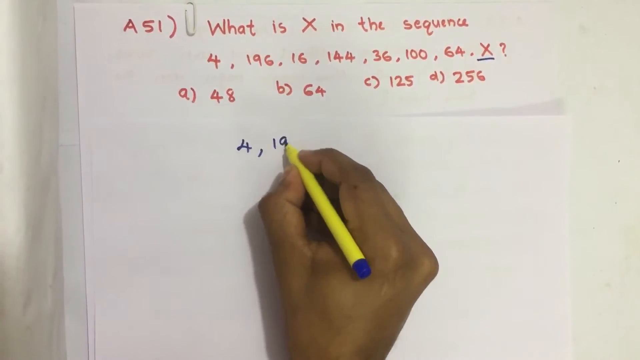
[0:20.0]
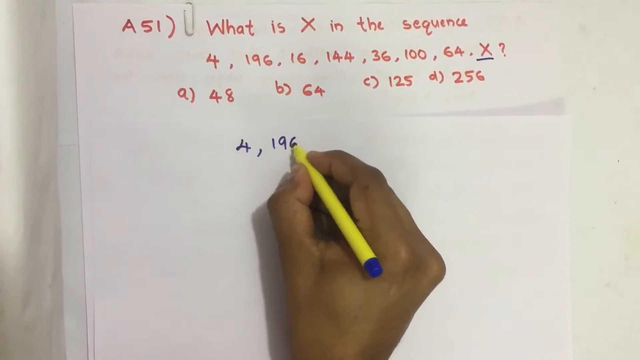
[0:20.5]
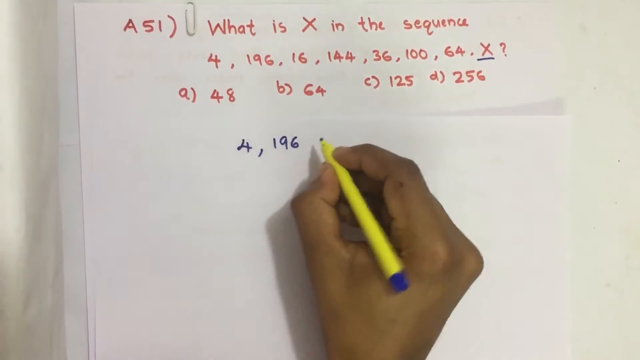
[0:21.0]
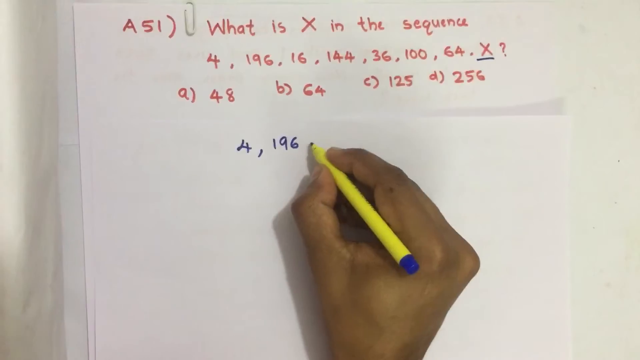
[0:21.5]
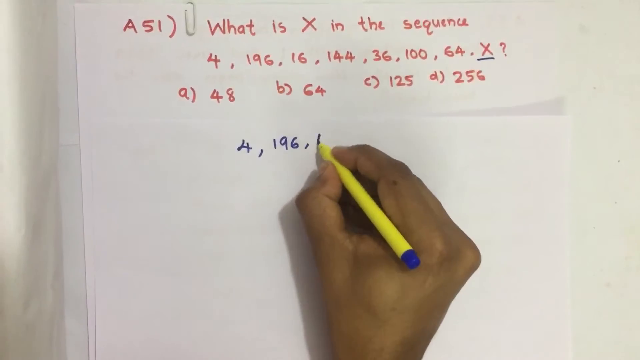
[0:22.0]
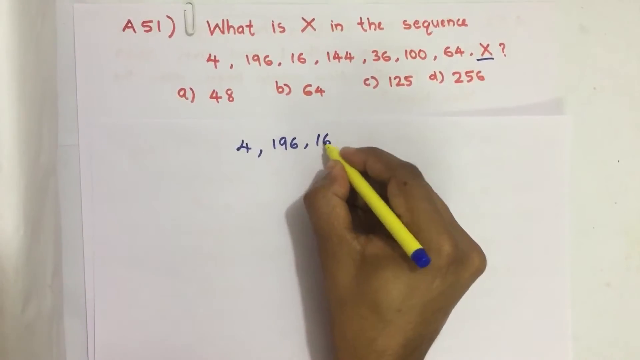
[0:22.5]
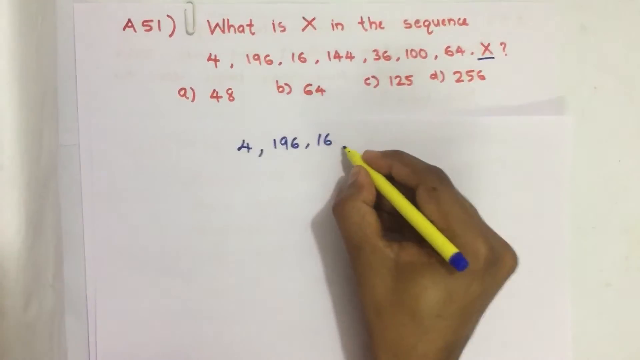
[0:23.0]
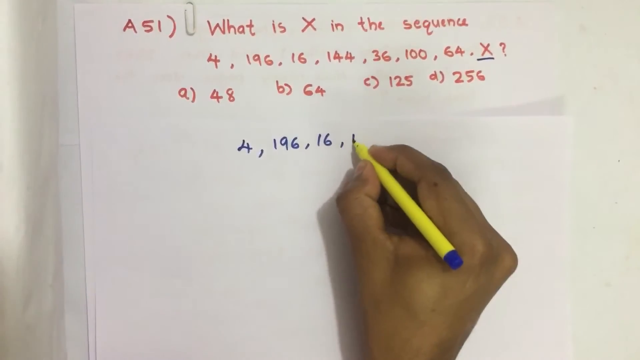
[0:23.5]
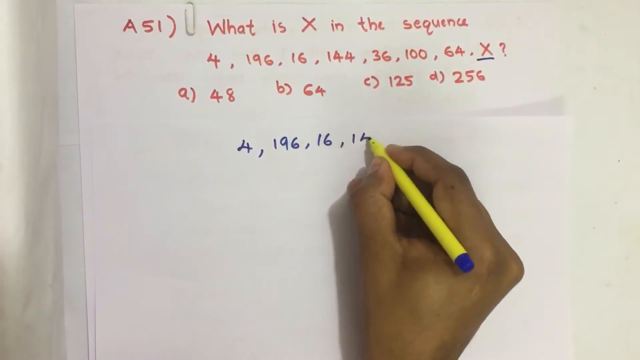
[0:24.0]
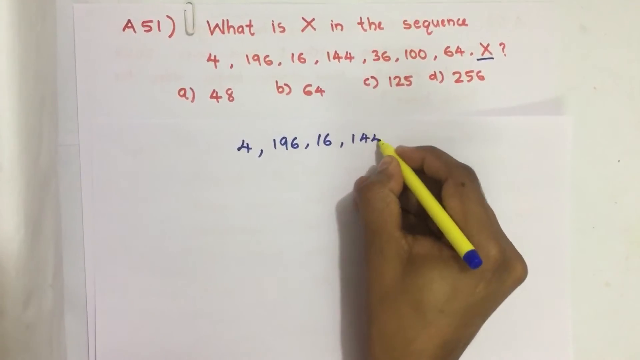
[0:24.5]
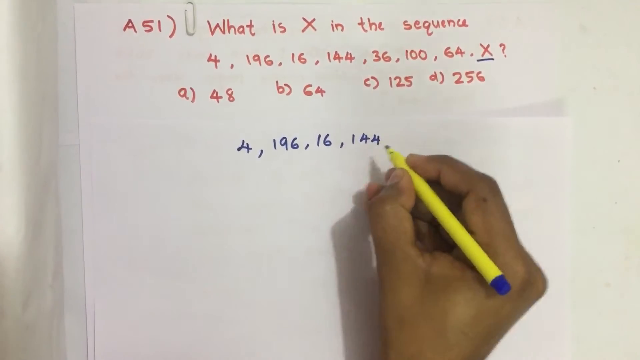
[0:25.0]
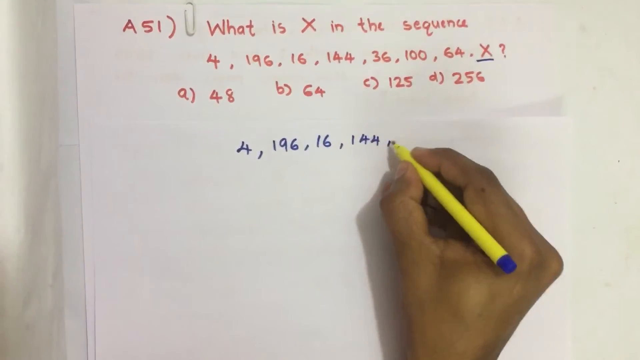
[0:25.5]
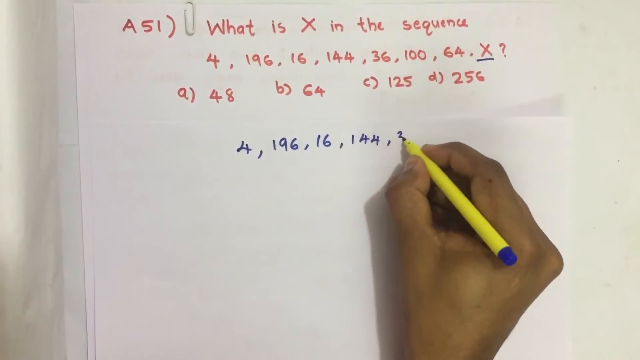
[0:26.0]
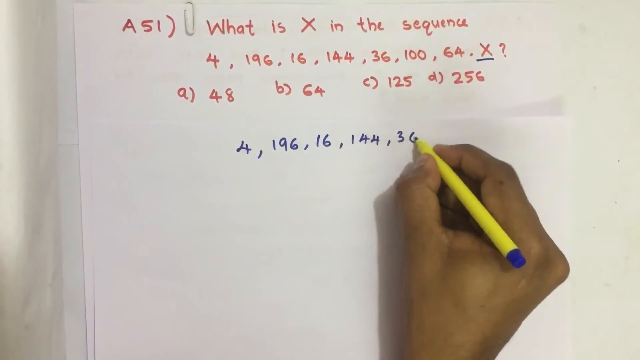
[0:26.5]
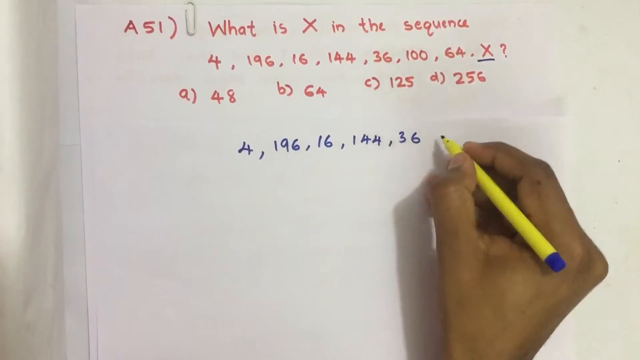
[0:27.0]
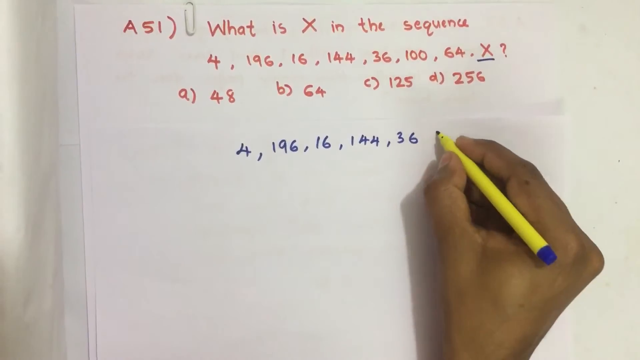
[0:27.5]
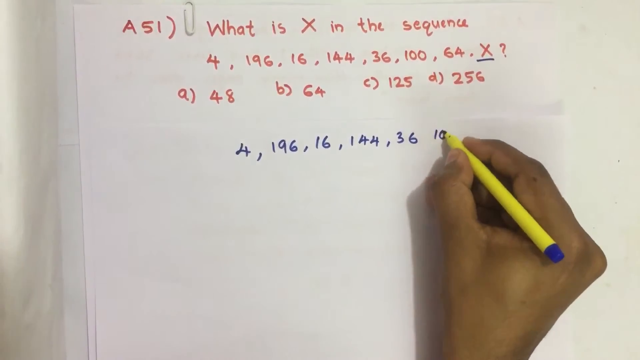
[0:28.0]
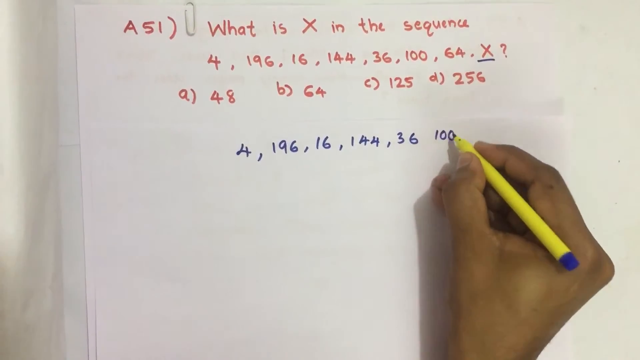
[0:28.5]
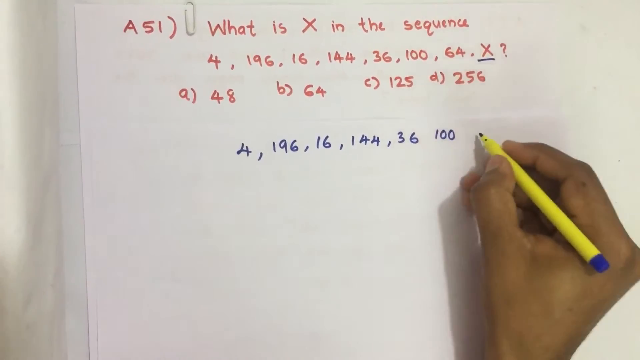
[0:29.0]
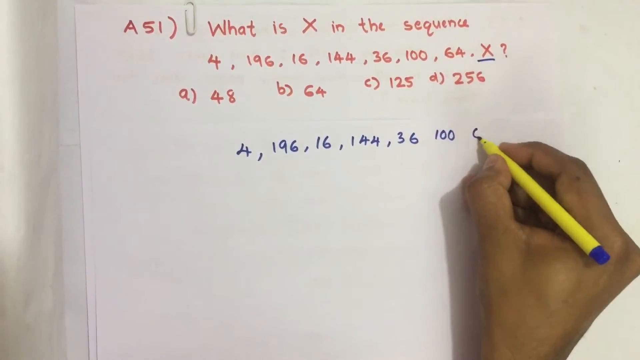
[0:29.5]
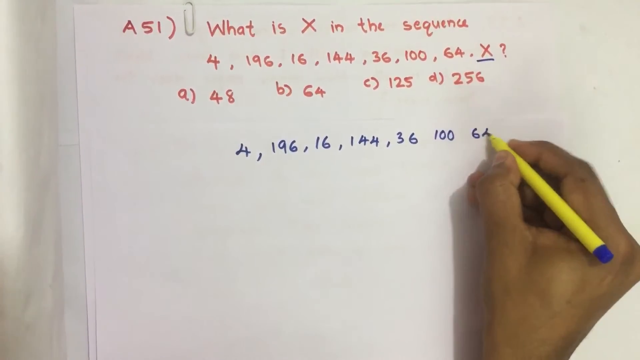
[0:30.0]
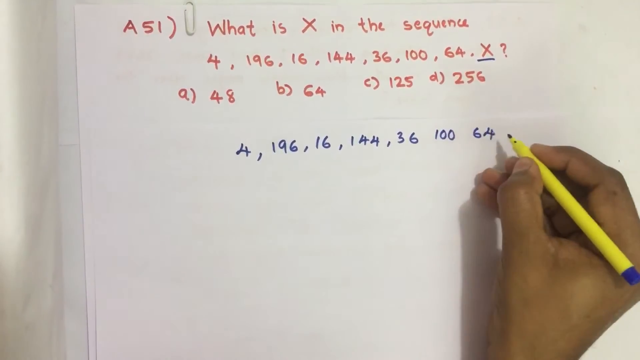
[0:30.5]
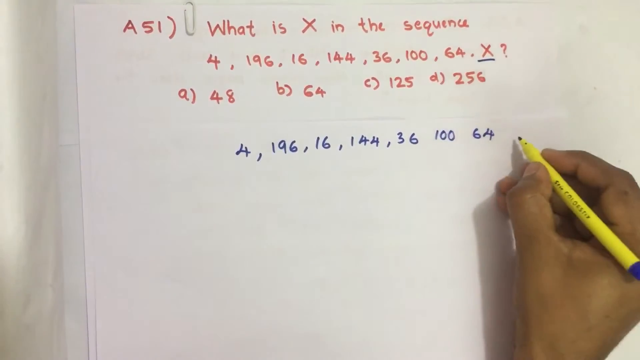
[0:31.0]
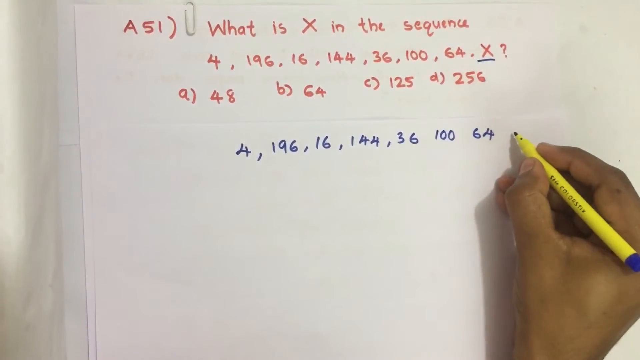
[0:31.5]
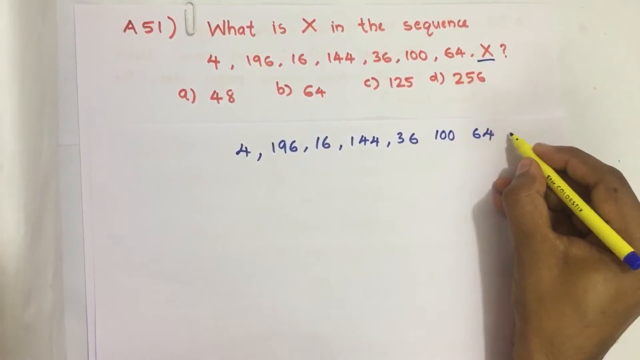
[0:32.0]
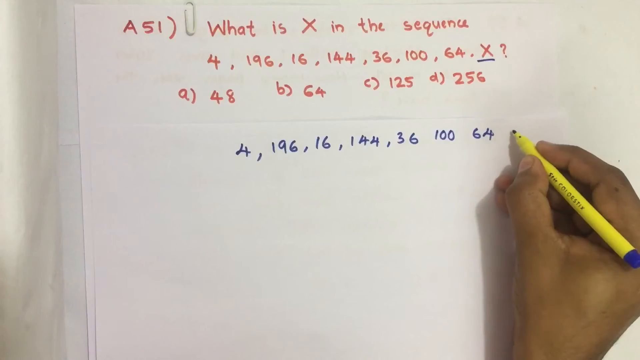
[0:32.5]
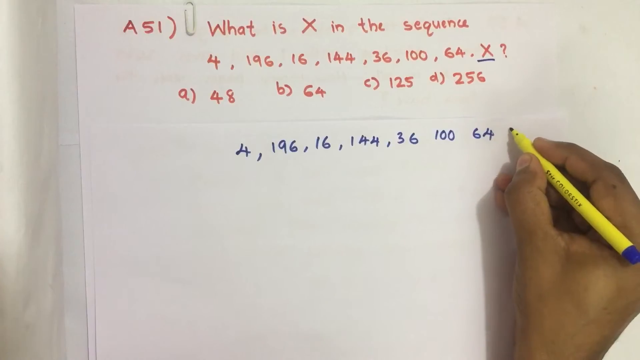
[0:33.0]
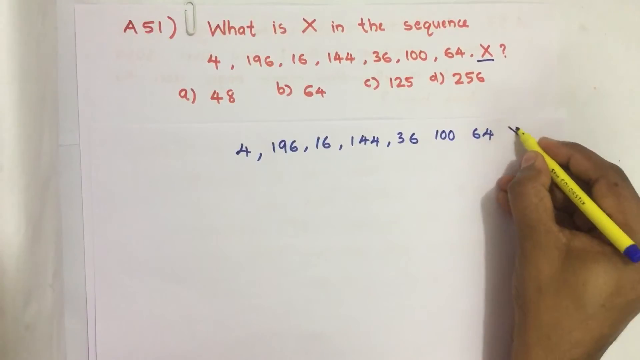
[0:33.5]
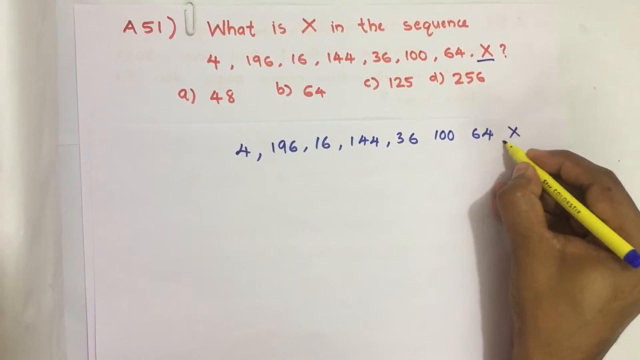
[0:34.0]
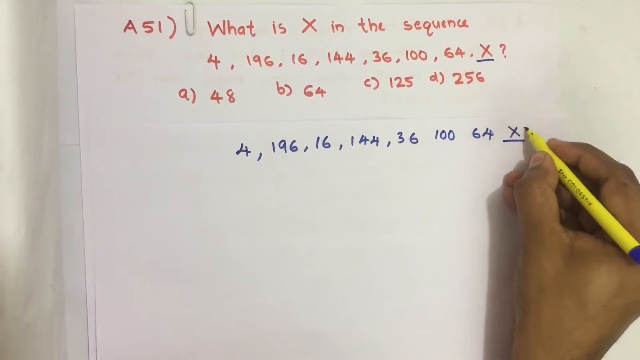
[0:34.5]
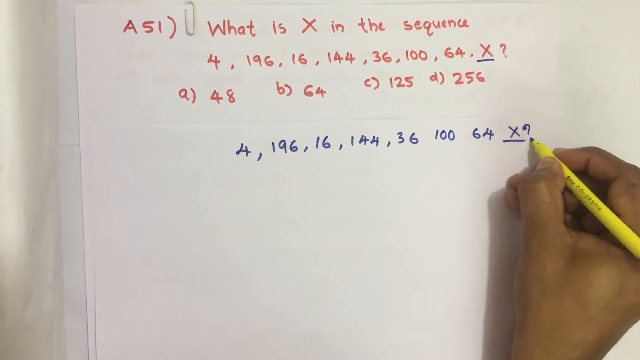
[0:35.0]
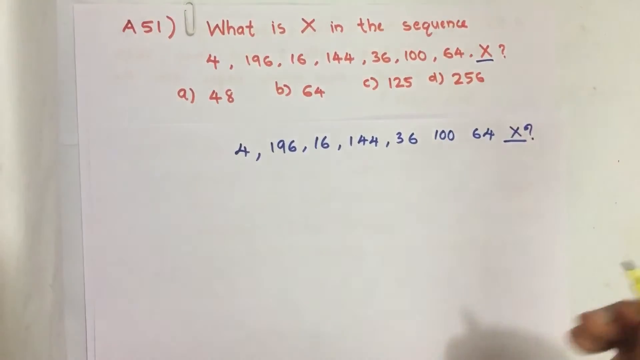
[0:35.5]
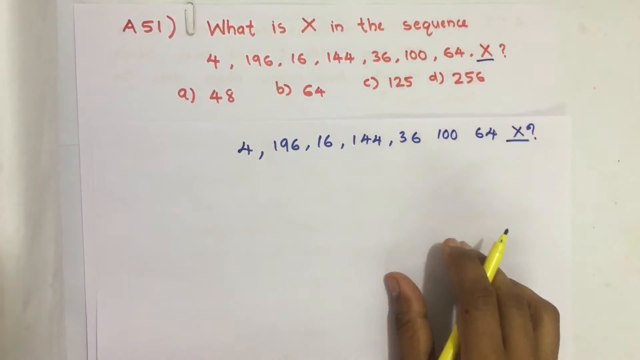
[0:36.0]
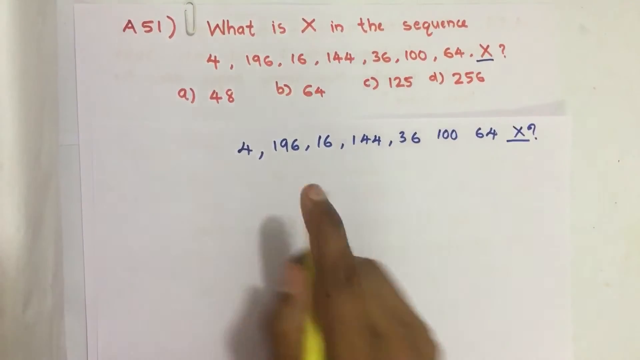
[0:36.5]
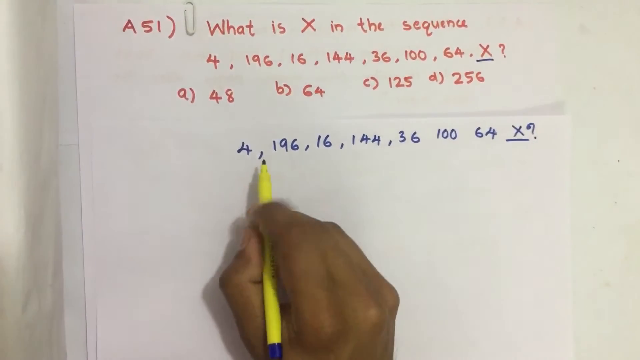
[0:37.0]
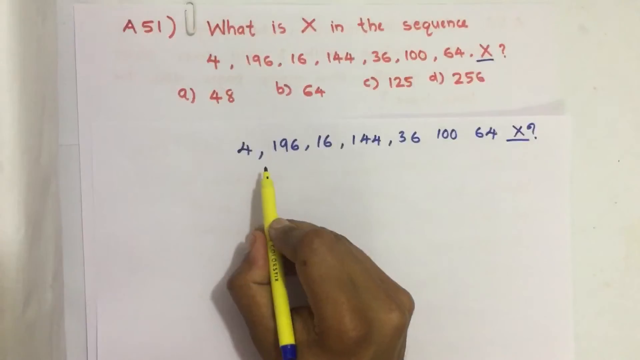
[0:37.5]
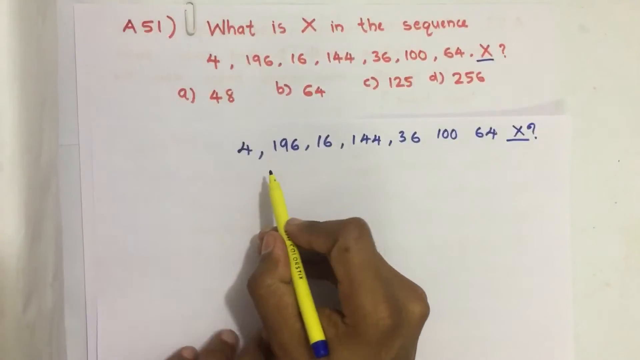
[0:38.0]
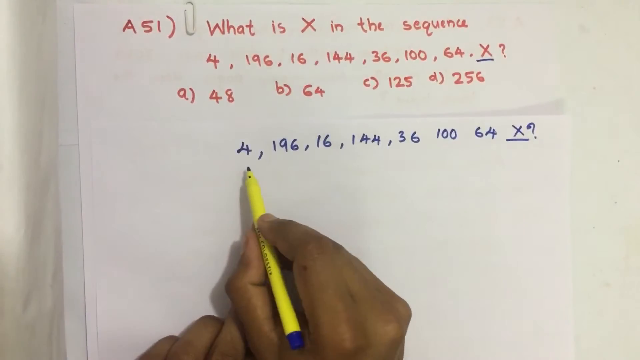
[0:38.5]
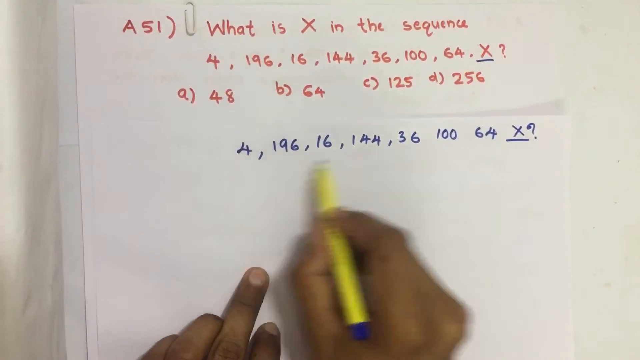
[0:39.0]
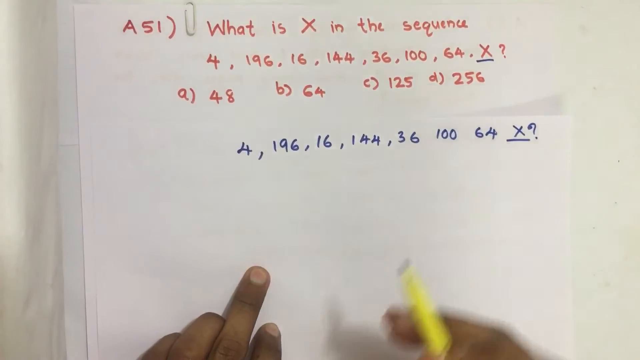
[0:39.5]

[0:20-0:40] The same problem, written in red on the white piece of paper, is shown as the same person's hand writes out the sequence to help solve it: 4, 196, 16, 144, 36, 100, and 64, separating each number with a comma. Lastly, they write X at the end, underline it, and put a question mark after it. They hold the pencil in their right hand; it looks like a mechanical pencil rather than one that is sharpened, and it is yellow with a blue tip at the top.